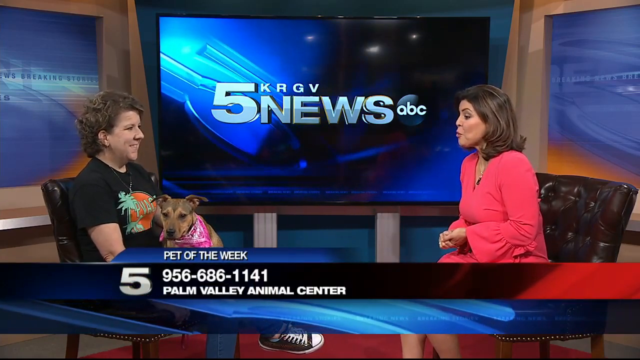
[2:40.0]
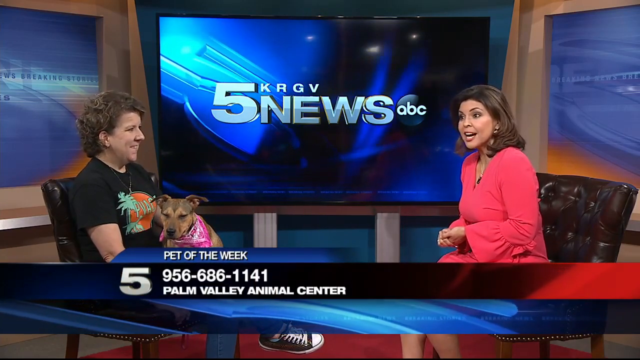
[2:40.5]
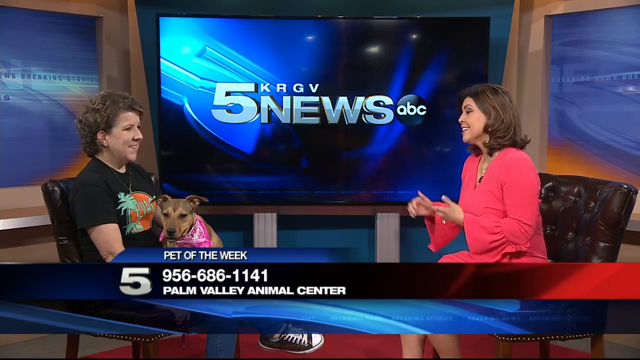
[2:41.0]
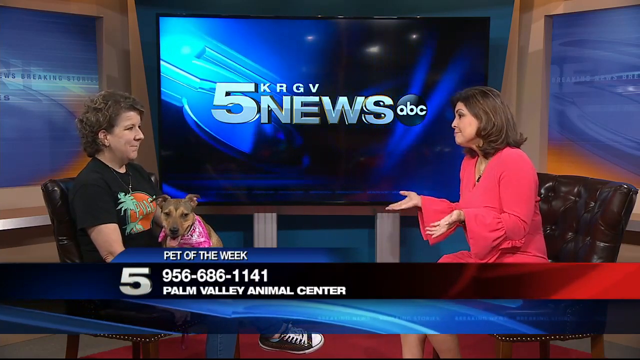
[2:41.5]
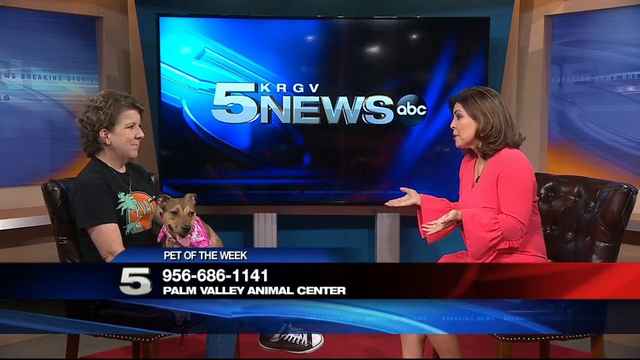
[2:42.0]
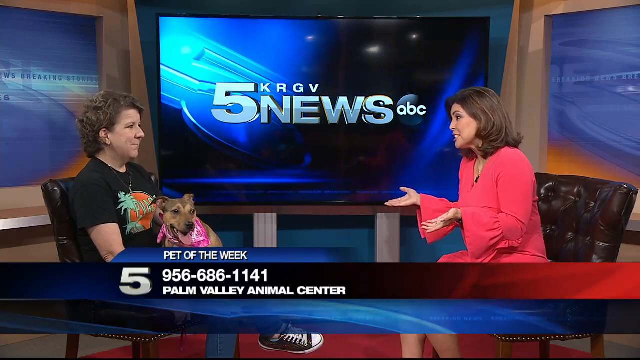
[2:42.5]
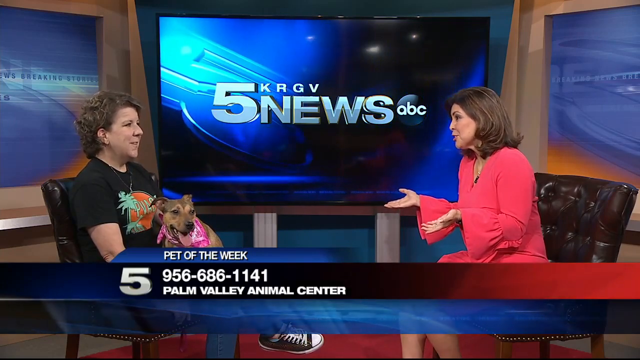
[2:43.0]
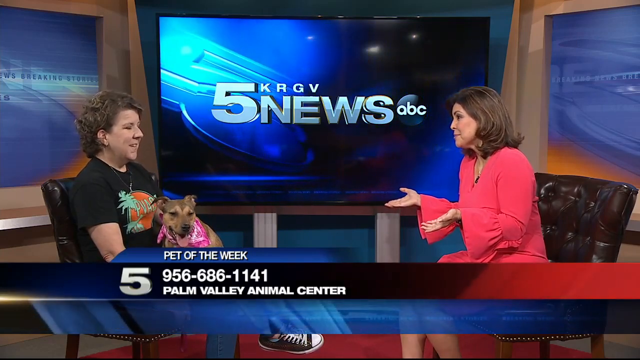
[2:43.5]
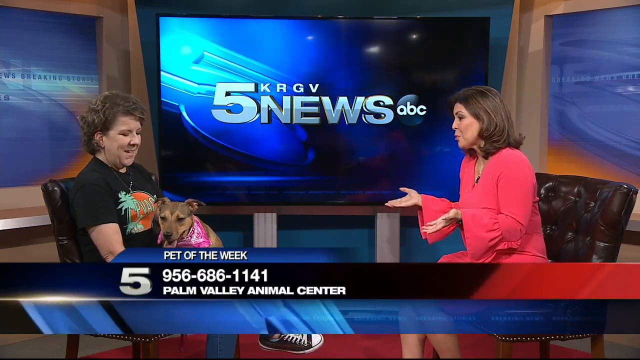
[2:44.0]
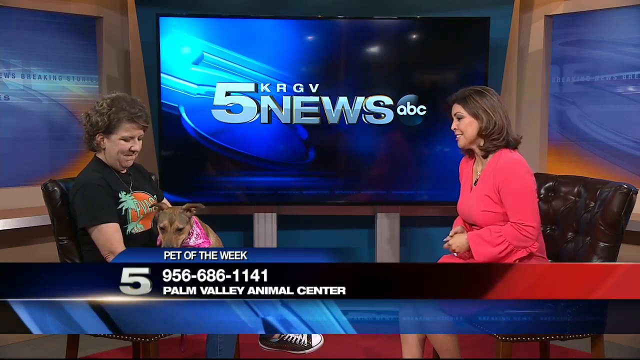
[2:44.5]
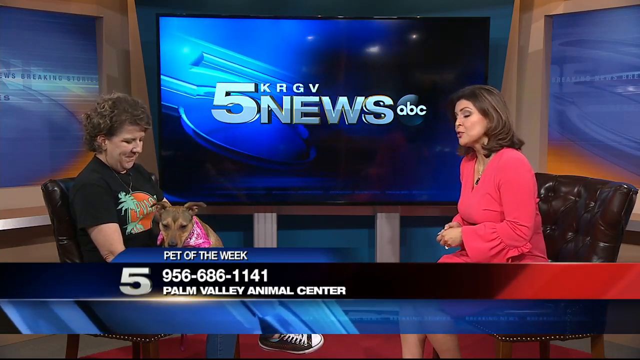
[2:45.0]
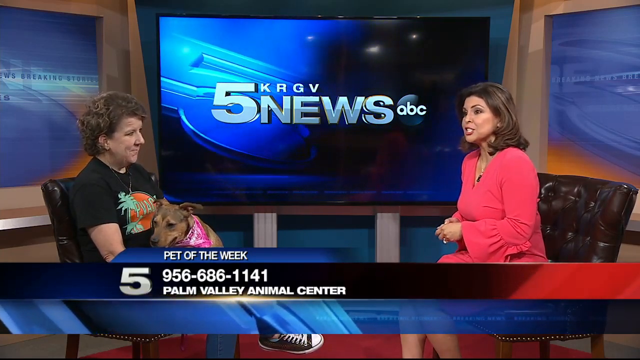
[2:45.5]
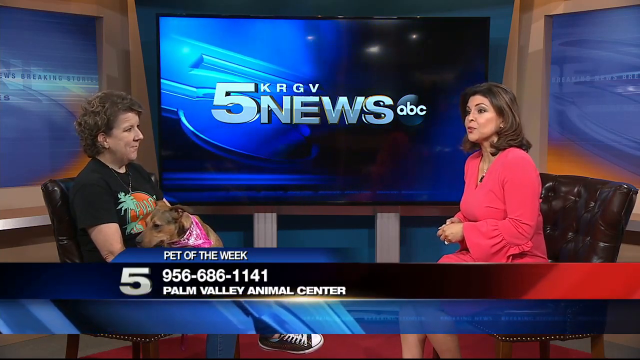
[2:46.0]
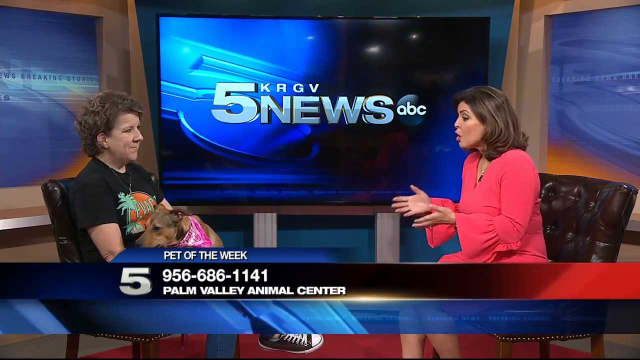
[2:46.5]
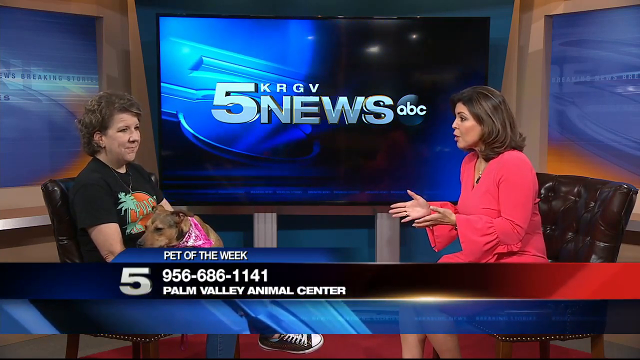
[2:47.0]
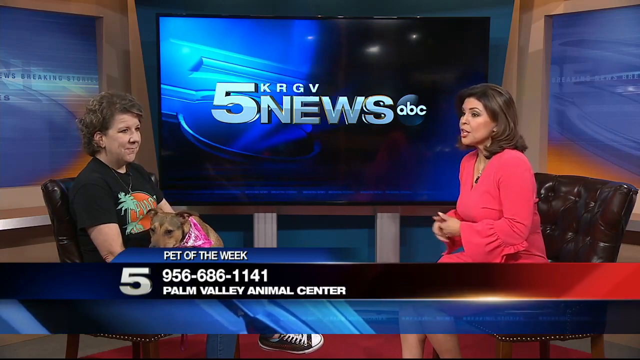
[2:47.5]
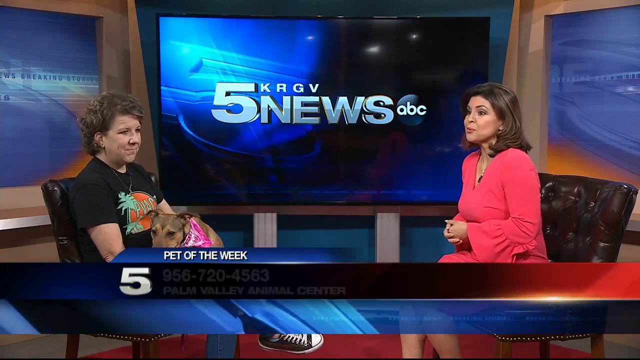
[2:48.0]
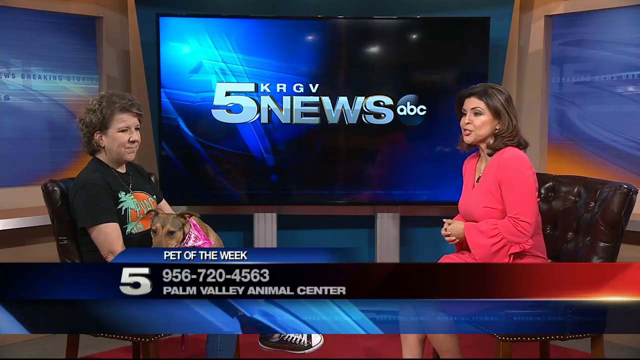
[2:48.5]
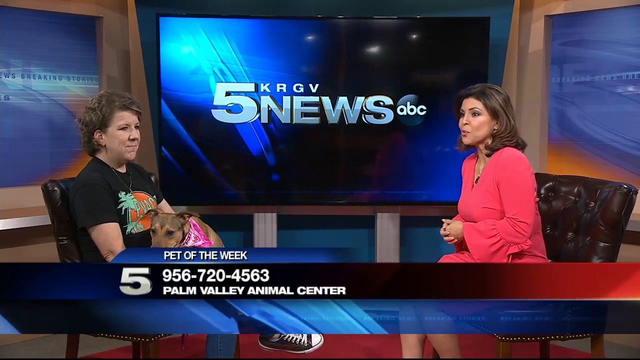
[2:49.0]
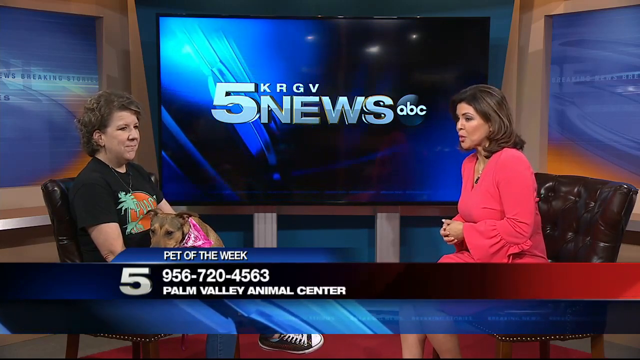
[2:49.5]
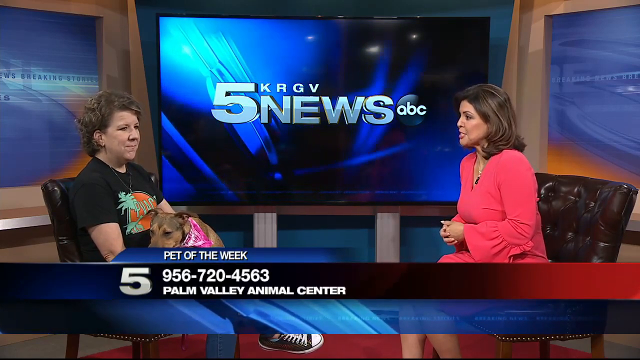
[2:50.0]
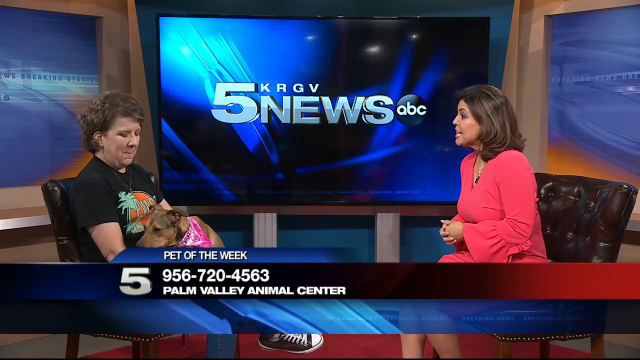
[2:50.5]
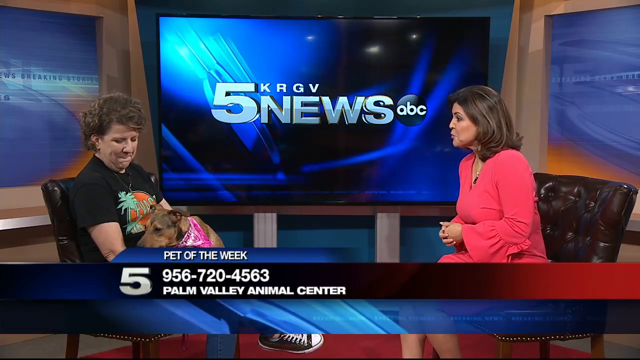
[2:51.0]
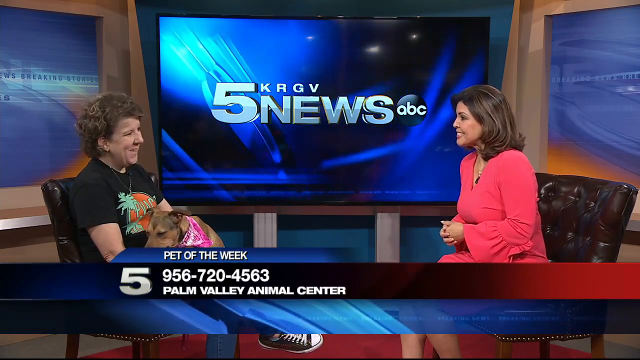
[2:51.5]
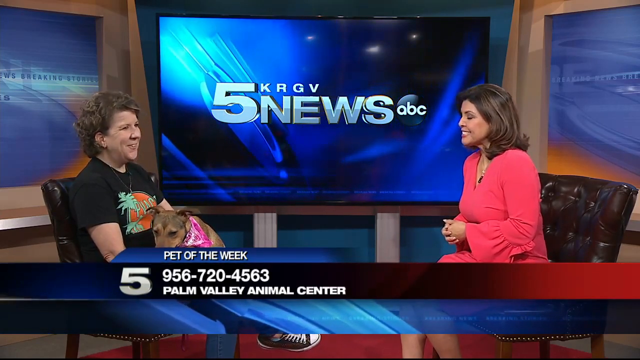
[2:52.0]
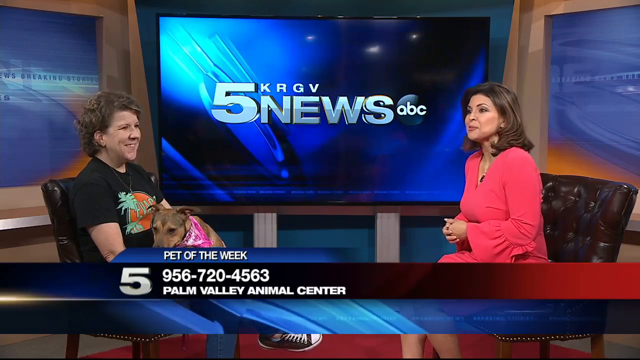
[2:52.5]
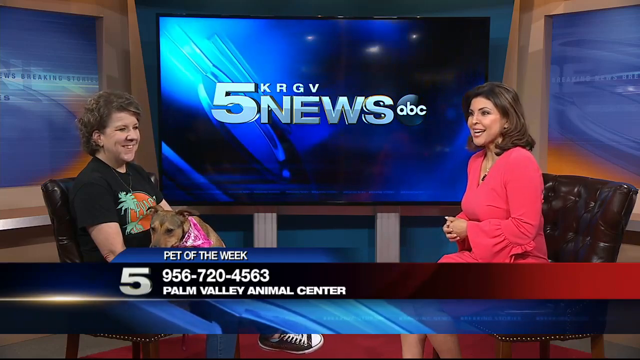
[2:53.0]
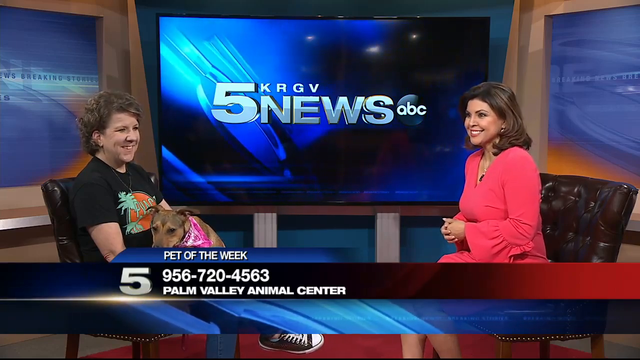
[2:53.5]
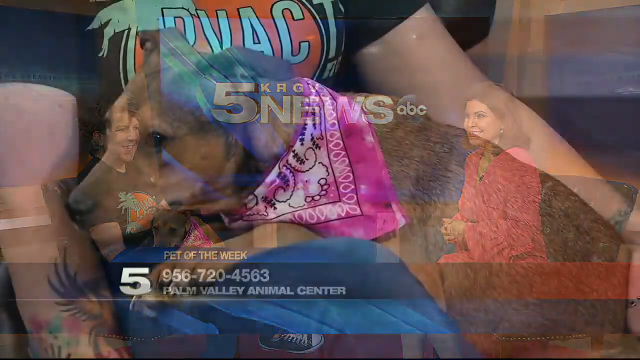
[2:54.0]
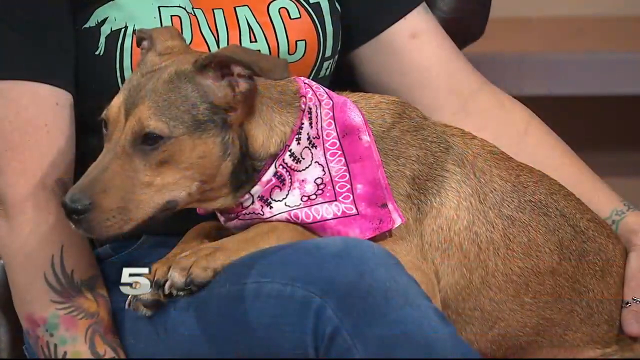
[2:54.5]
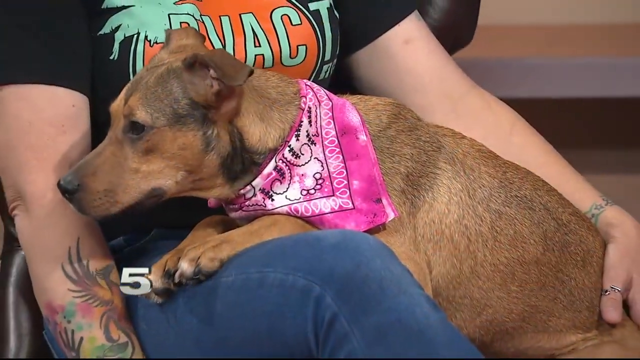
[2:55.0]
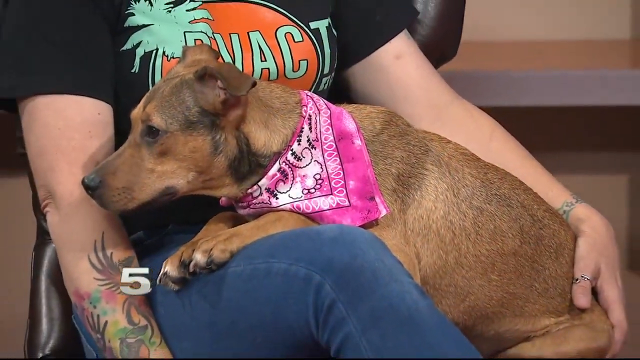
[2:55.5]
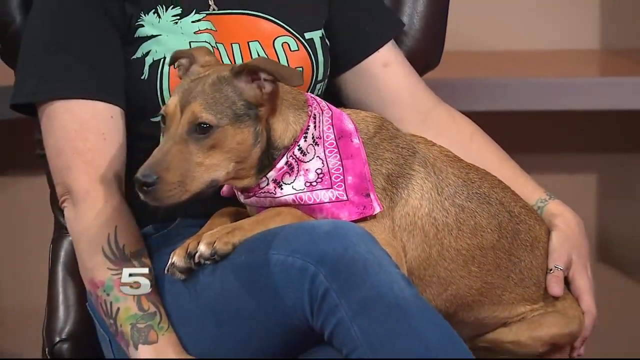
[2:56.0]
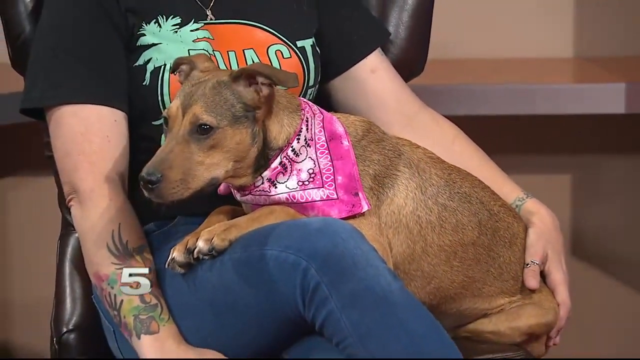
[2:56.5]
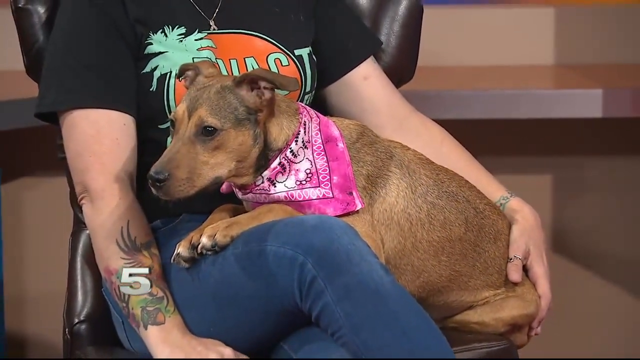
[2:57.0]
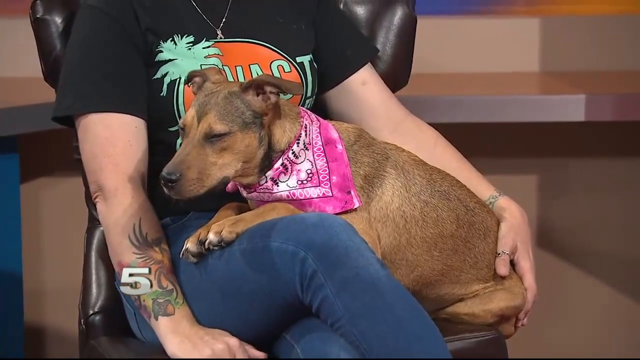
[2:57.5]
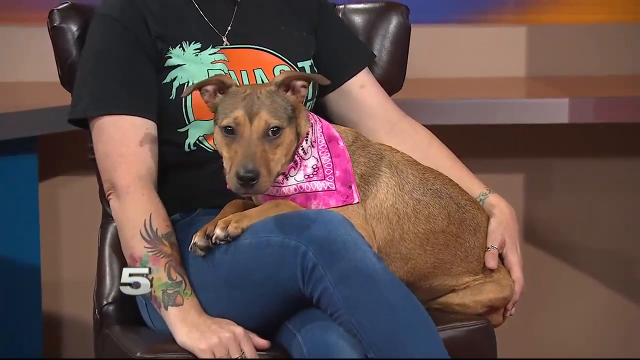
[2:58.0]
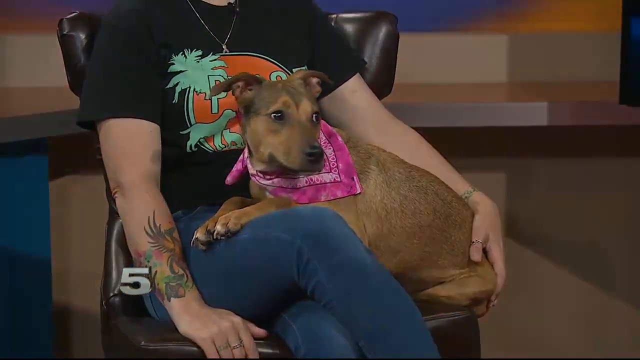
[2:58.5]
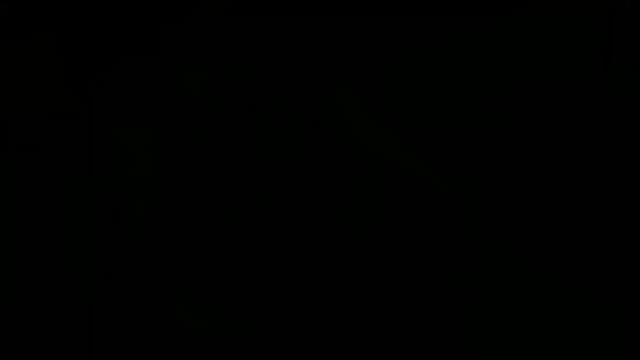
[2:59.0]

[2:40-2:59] The news anchor puts out both her hands as she talks. The banner with the Palm Valley Animal Center number is still on screen. The camera focuses on the dog, which looks back behind toward its tail and then at the news anchor. The dog owner looks at the news anchor, then at the dog and the anchor. The dog stays calm and relaxed. The camera zooms into the dog, the interview fades out, and the screen goes black.